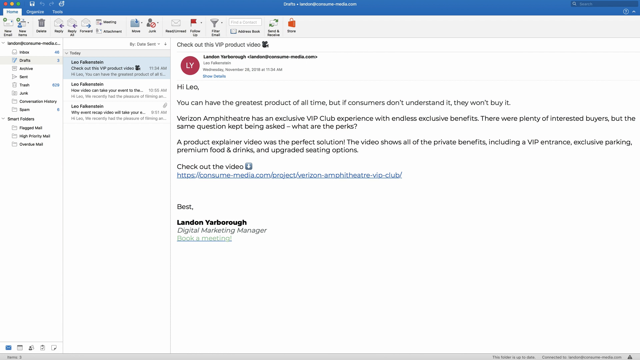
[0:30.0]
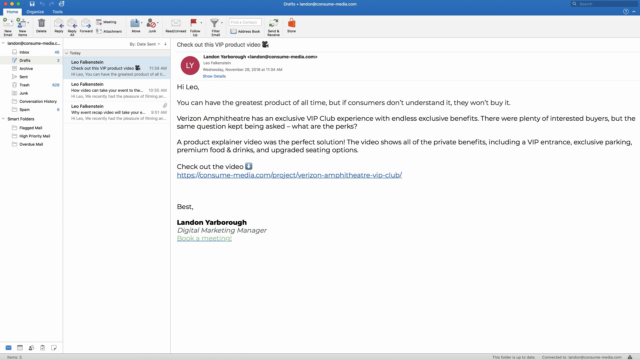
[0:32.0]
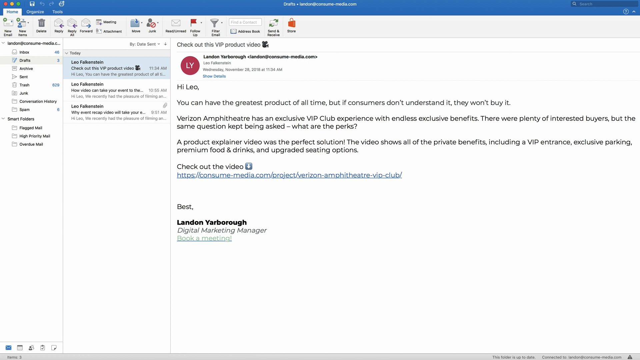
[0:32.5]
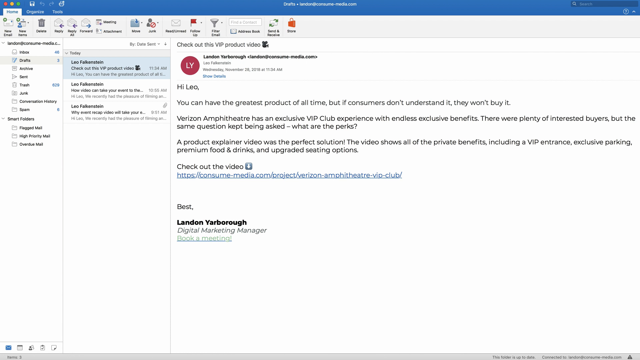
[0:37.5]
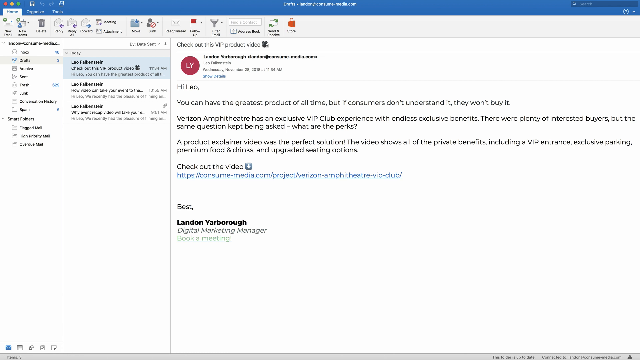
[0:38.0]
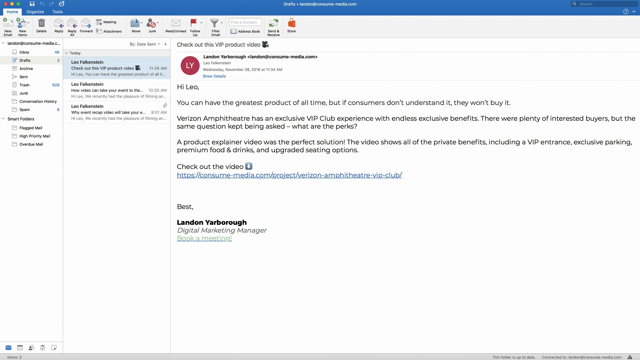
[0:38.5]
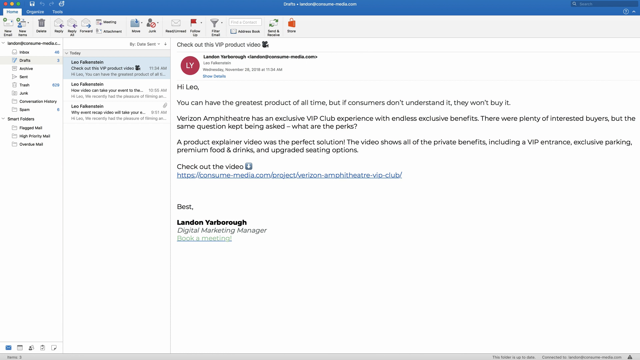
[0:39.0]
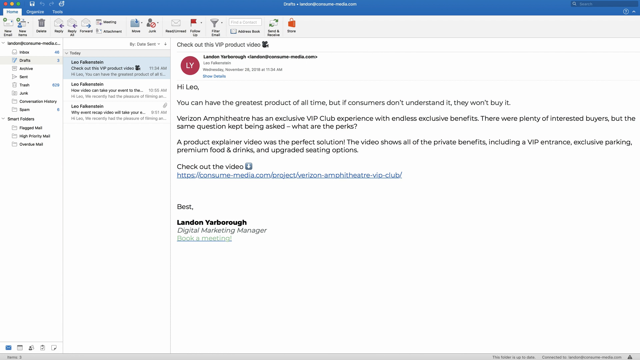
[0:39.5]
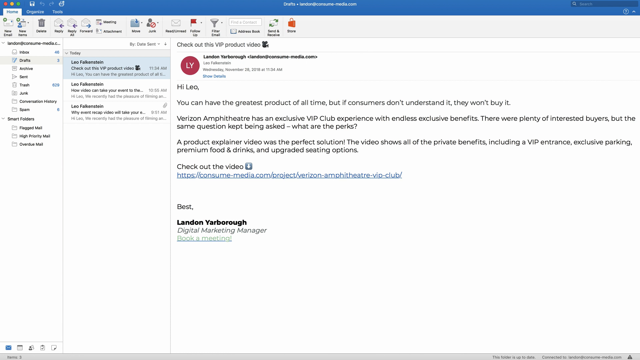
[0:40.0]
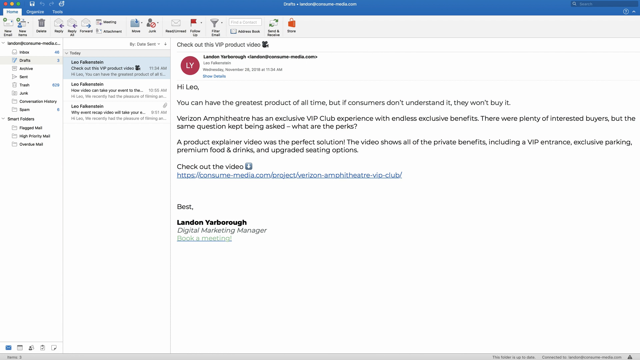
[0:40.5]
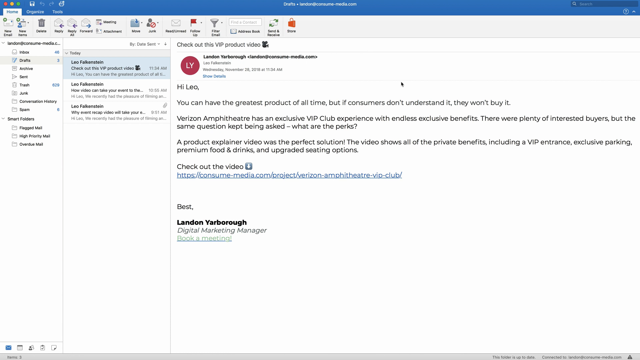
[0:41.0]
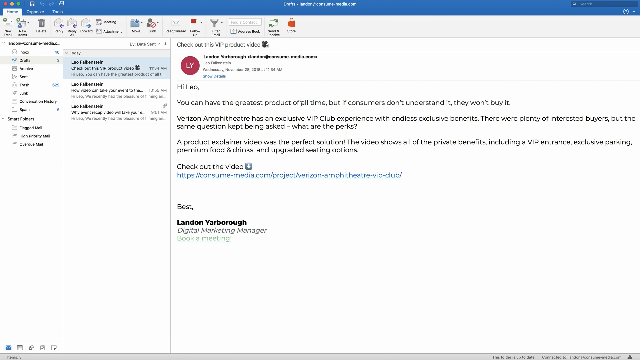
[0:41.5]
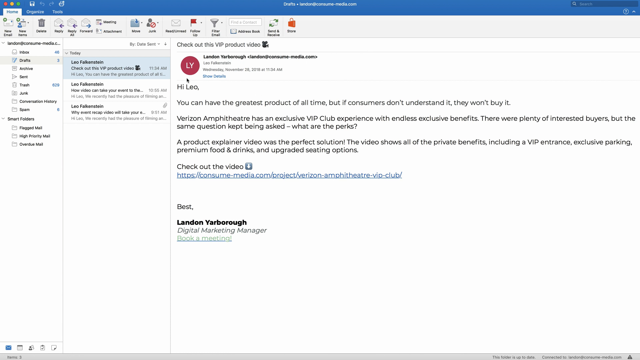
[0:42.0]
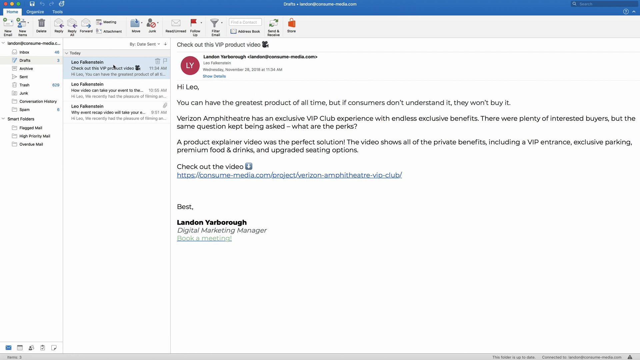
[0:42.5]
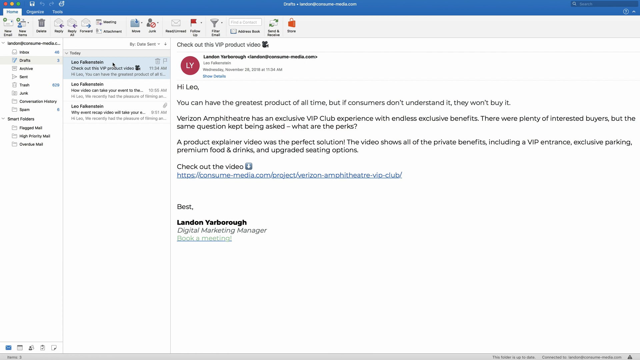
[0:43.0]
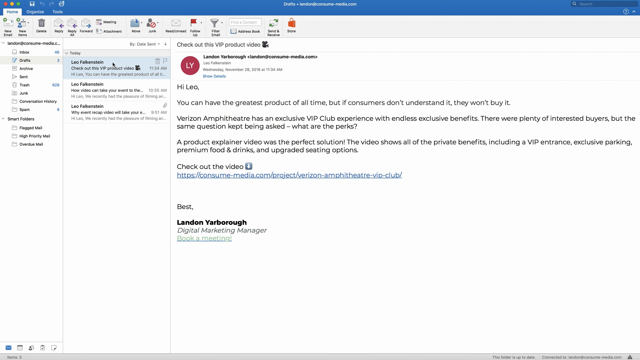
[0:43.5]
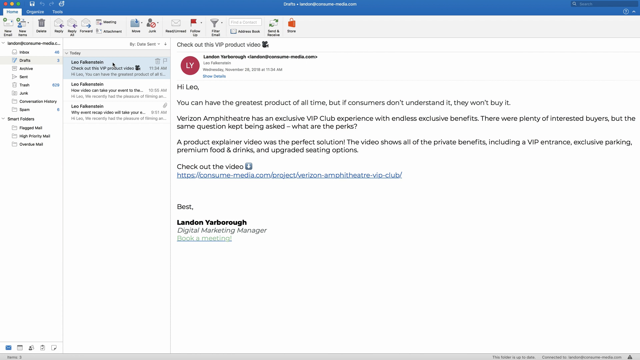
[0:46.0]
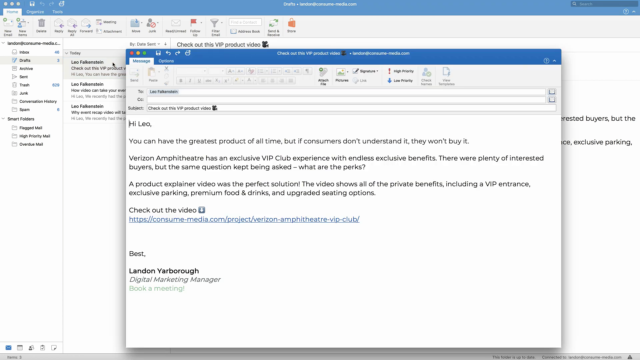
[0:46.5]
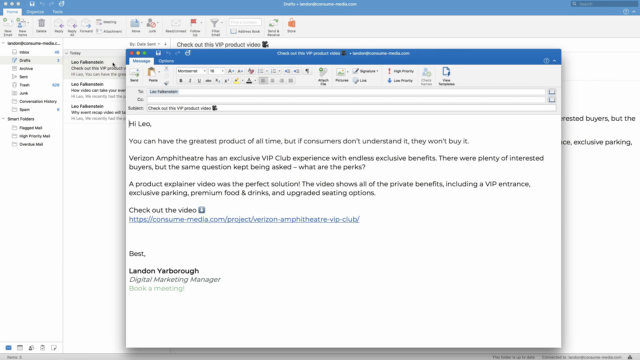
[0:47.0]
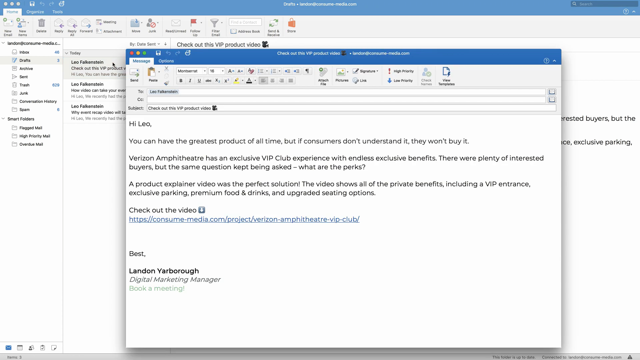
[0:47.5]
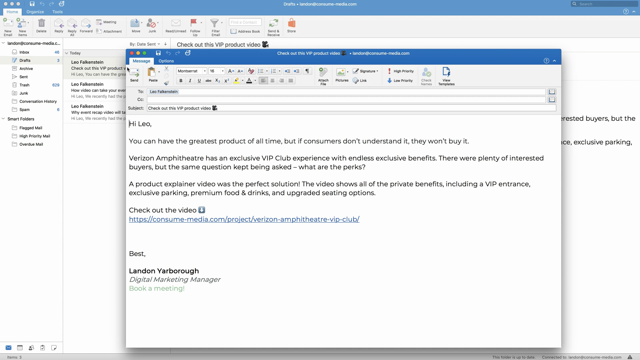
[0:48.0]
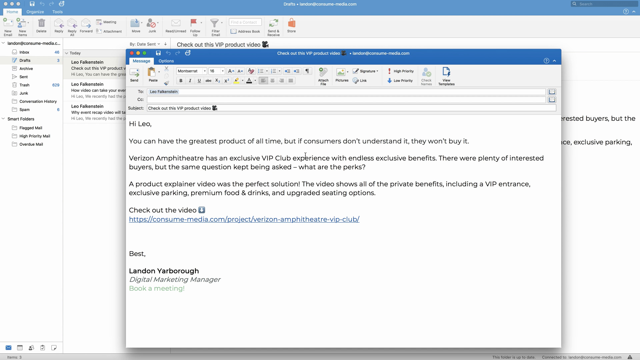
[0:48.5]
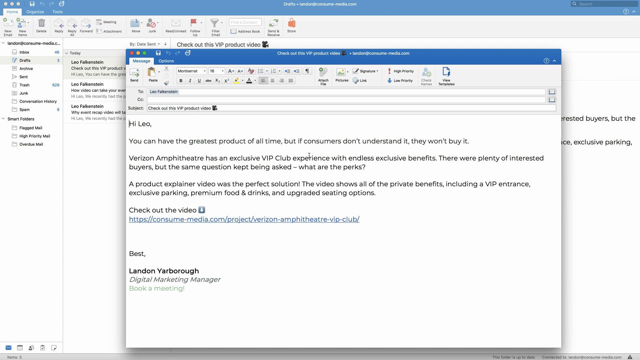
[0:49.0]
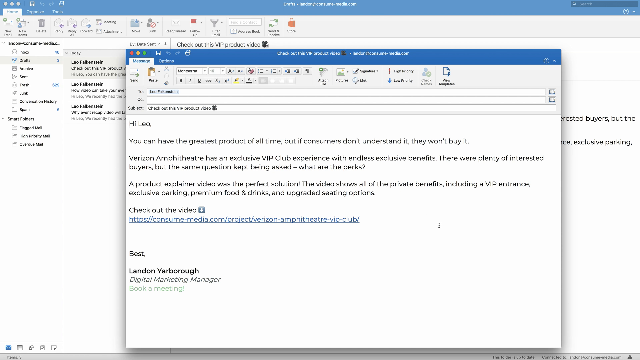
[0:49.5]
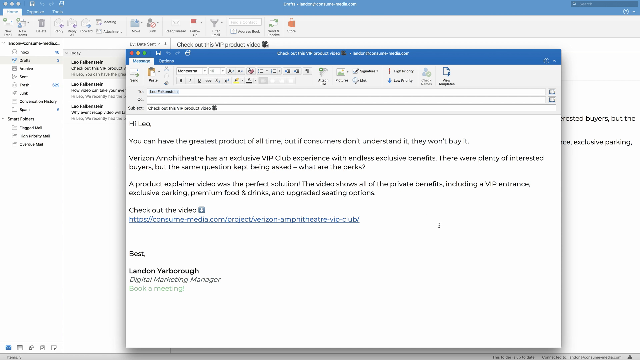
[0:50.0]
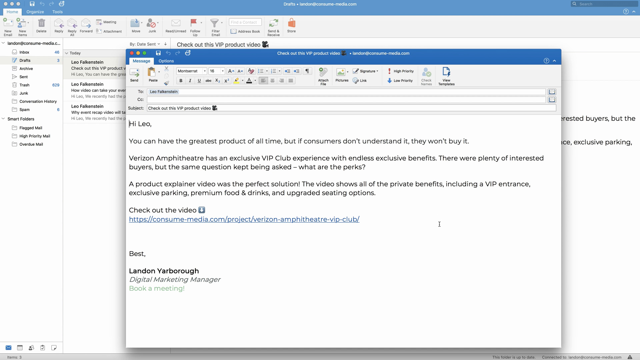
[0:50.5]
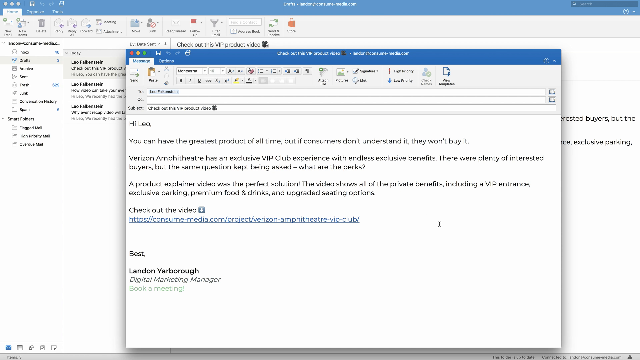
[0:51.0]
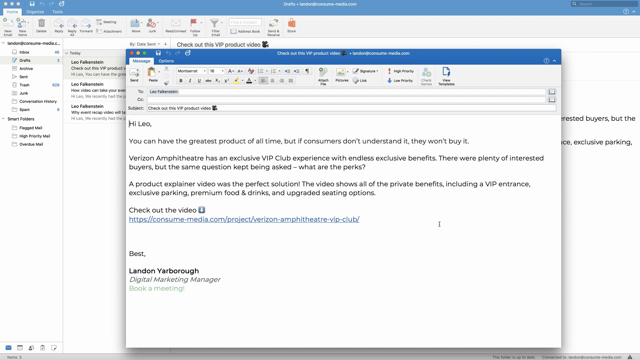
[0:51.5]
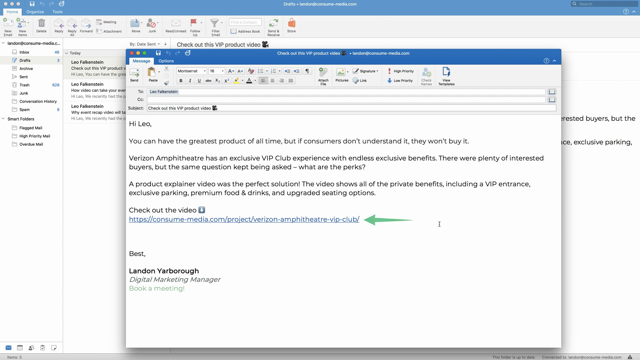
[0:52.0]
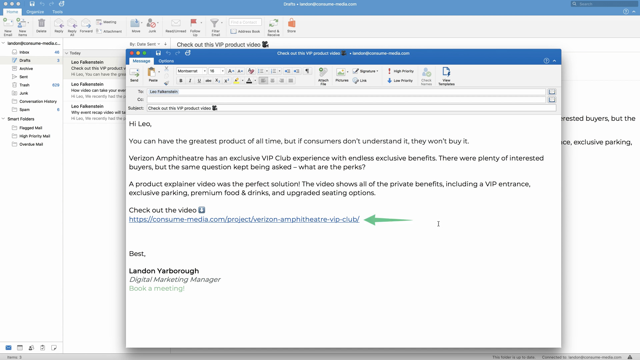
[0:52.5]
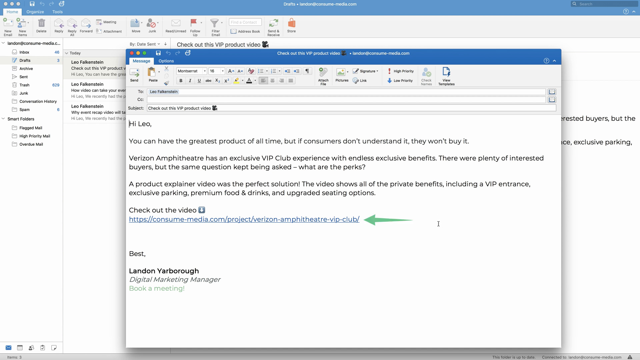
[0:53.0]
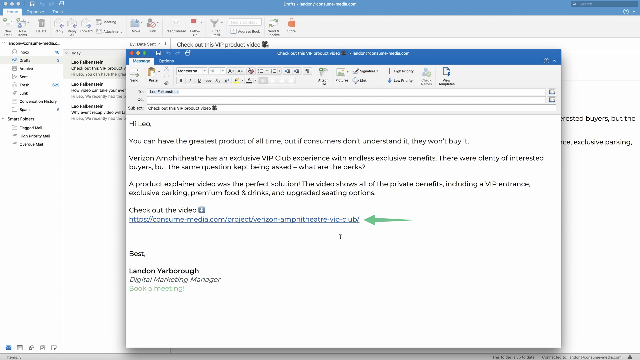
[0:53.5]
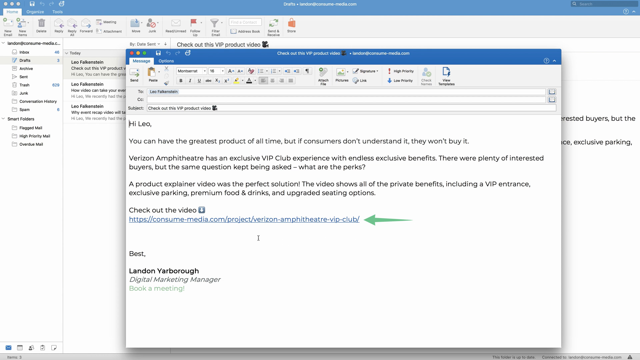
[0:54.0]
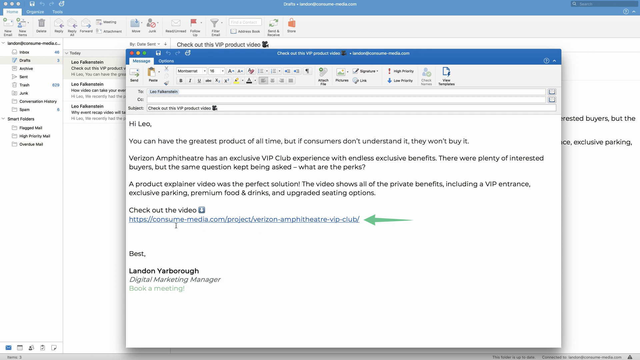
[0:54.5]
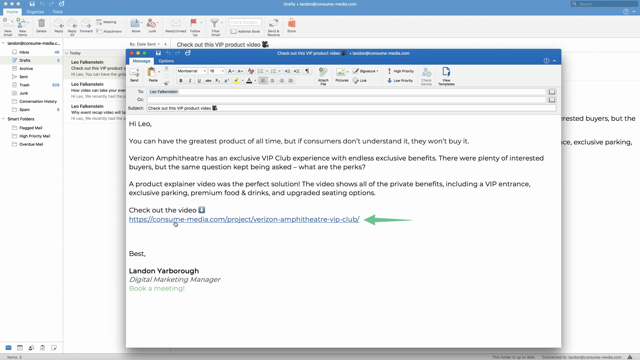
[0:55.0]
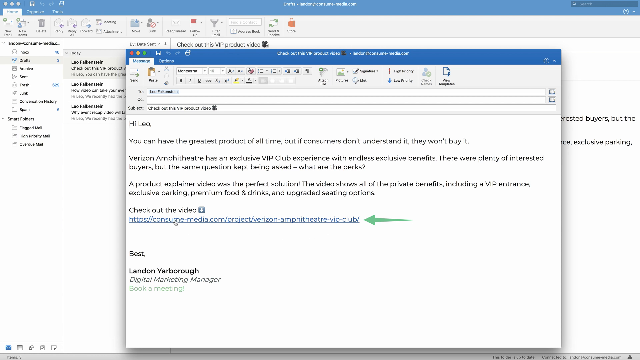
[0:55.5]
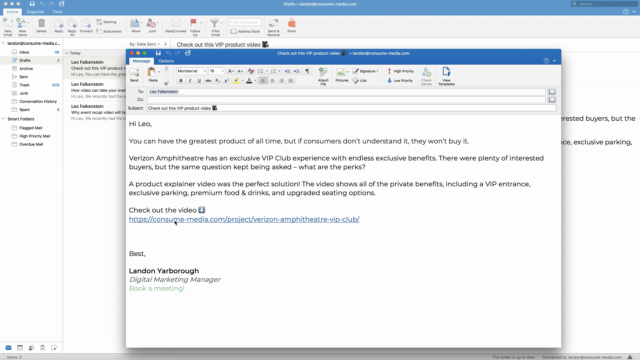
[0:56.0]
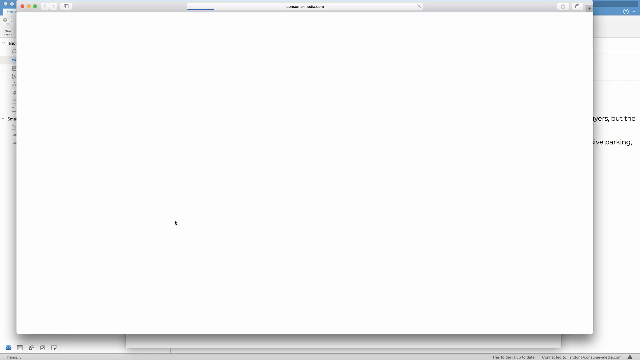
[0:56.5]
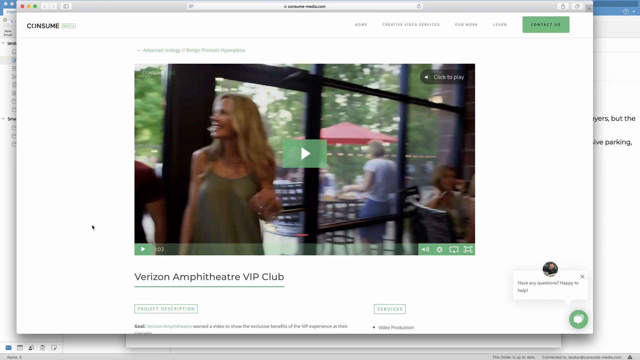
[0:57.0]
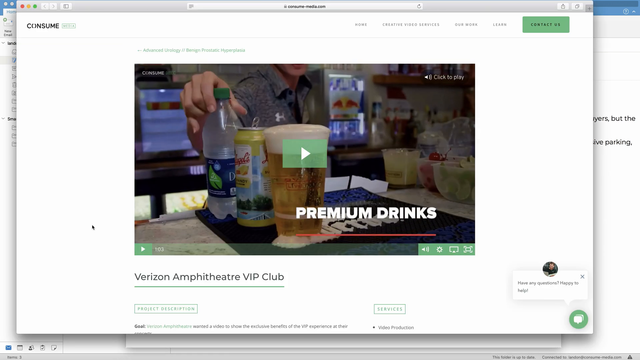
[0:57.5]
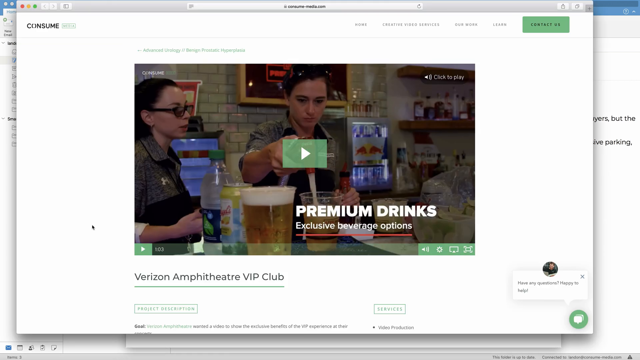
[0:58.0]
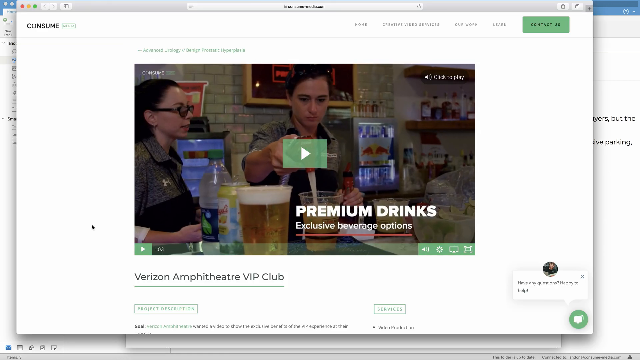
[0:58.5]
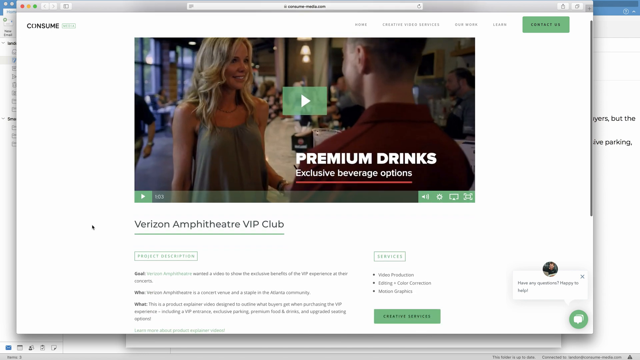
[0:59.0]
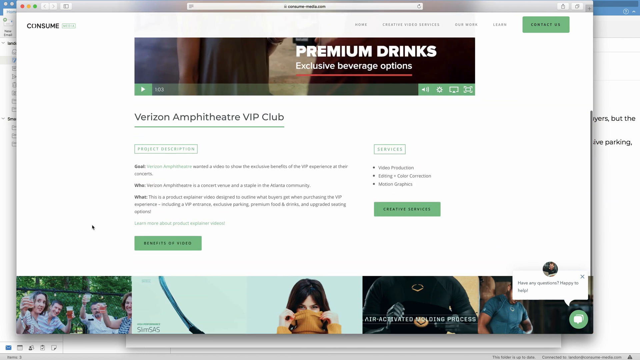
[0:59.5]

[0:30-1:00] An email inbox shows an email from Landon Yarborough, the digital marketing manager. The email reads: "Hi Leo, you can have the greatest product of all time. But if consumers don't understand it, they won't buy it. Verizon Amphitheater has an exclusive VIP club experience, with endless exclusive benefits. There were plenty of interested buyers. But the same question kept being asked, what are the perks? A product explainer video was the perfect solution. The video shows of all the private benefits, including a VIP entrance, exclusive parking, premium food and drinks, and upgraded seating options." Attached to the email is a link to the video, reading consumemedia.com, projects, Verizon Amphitheater VIP club. The video from the link shows a group of men and women sitting in a club setting, drinking beer, chatting and laughing.